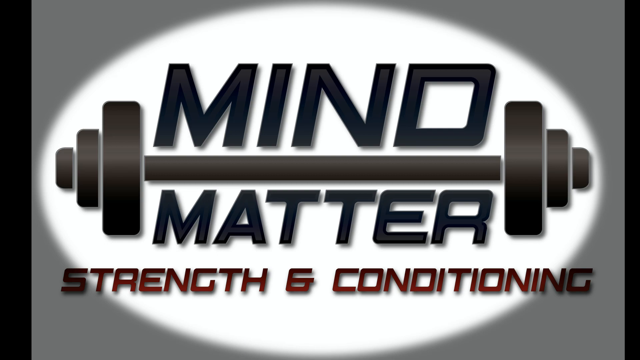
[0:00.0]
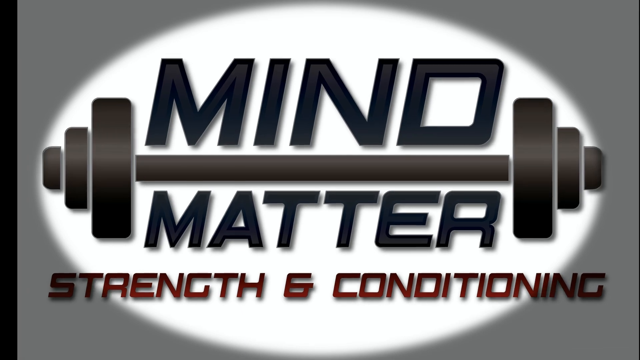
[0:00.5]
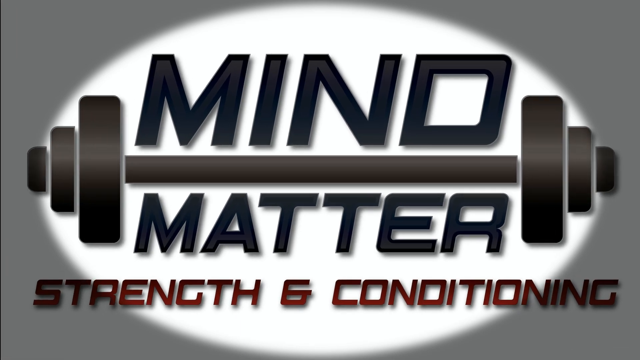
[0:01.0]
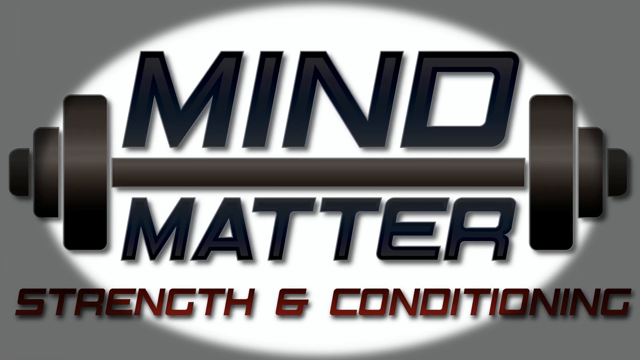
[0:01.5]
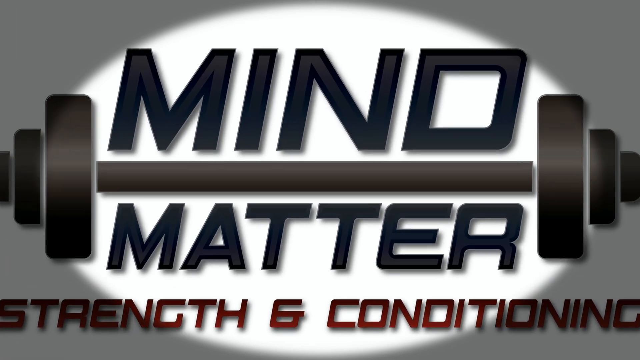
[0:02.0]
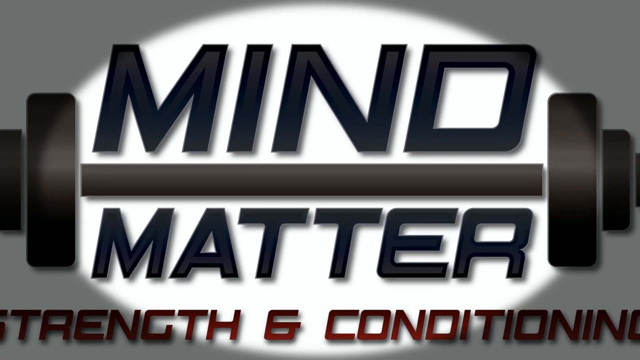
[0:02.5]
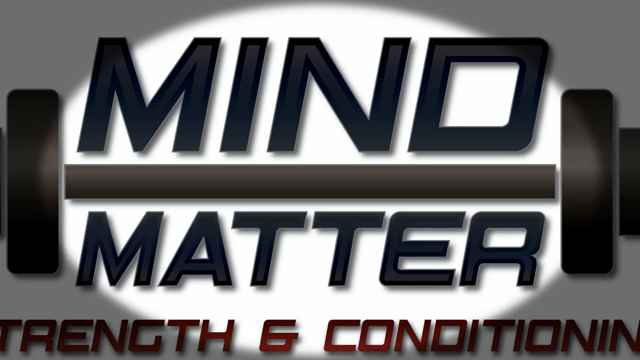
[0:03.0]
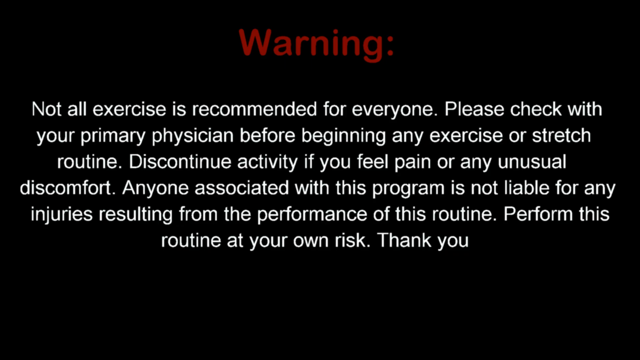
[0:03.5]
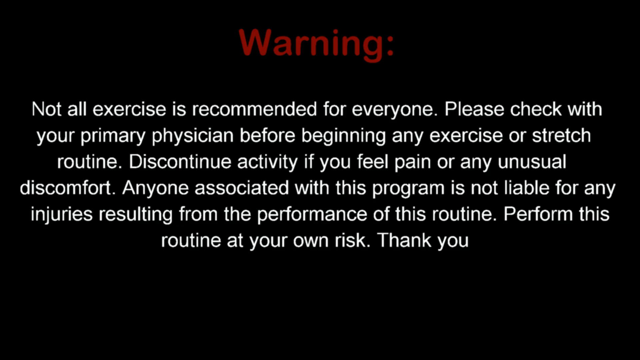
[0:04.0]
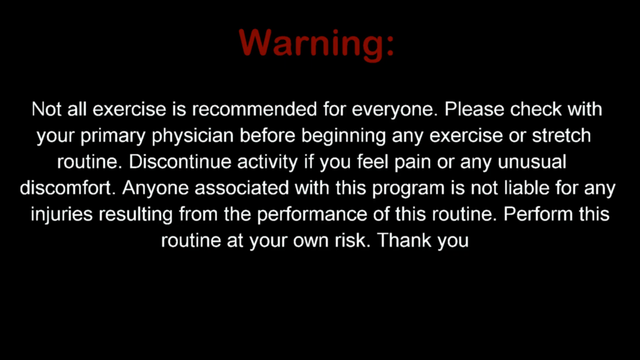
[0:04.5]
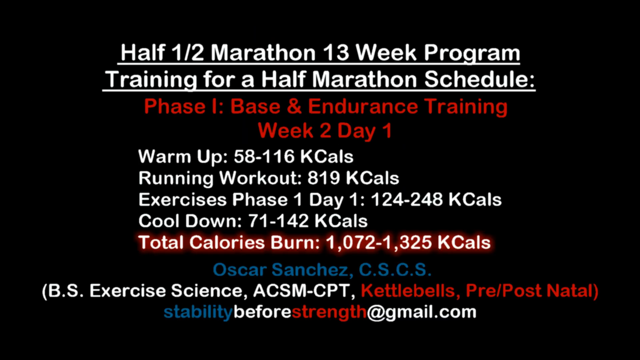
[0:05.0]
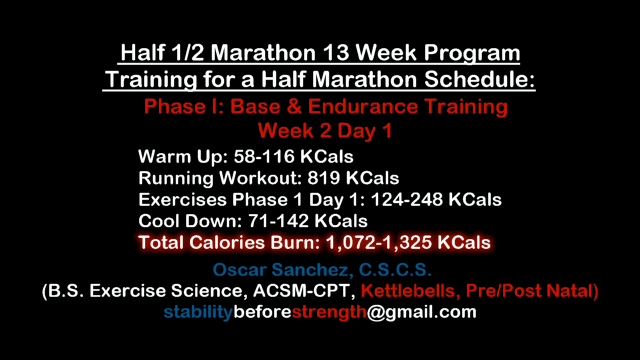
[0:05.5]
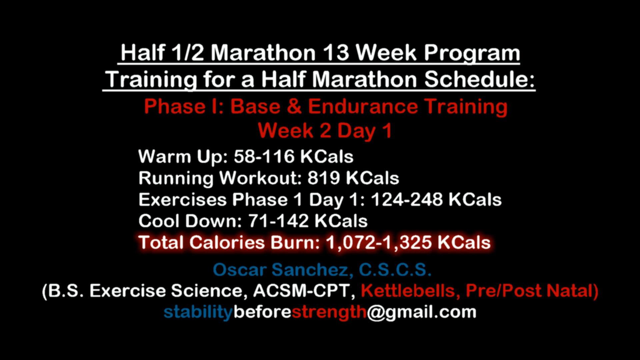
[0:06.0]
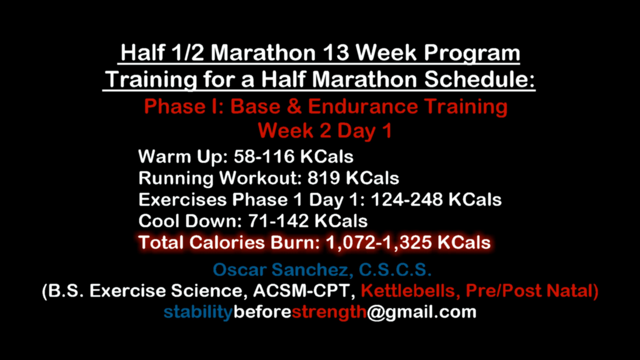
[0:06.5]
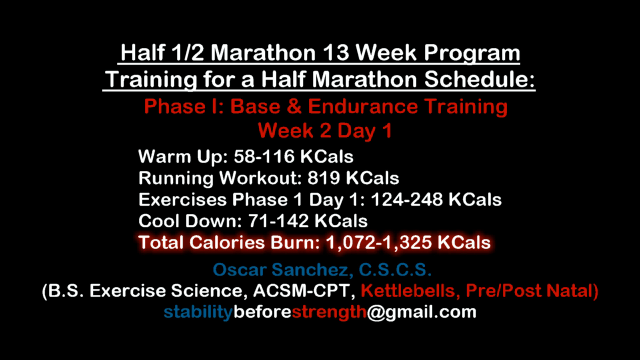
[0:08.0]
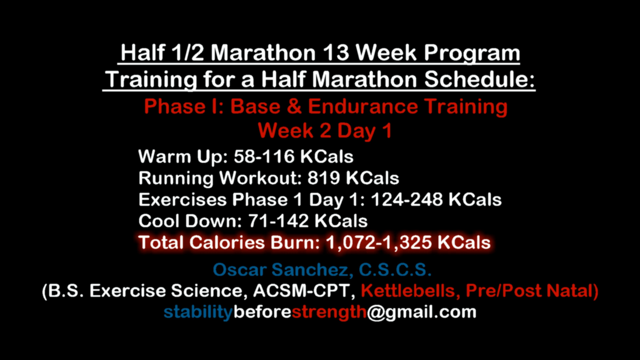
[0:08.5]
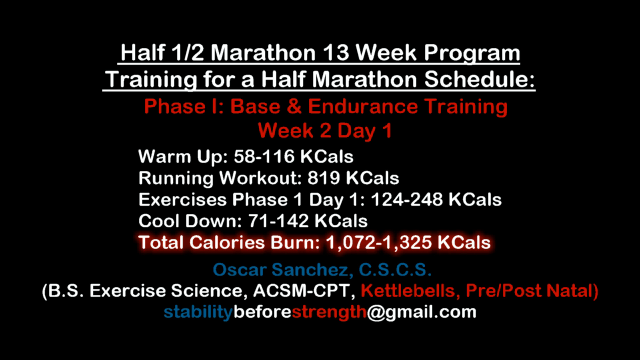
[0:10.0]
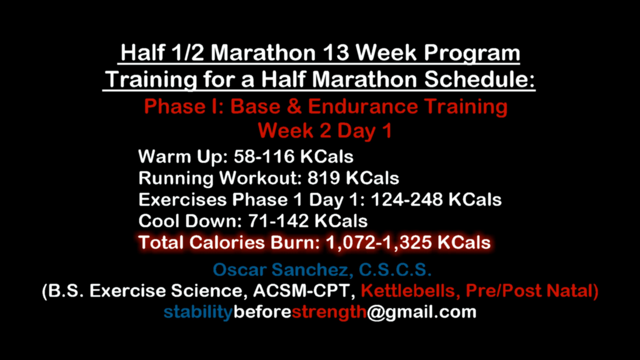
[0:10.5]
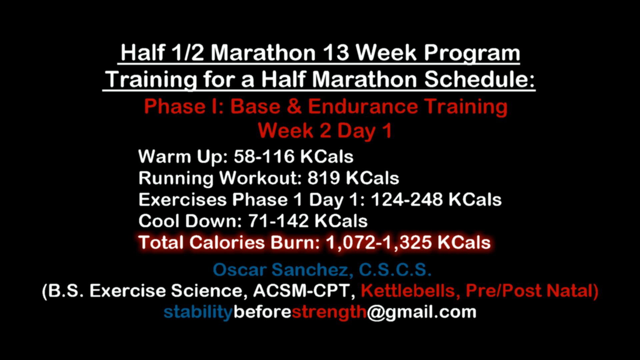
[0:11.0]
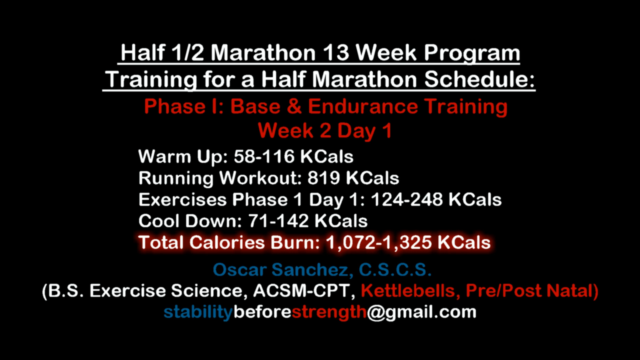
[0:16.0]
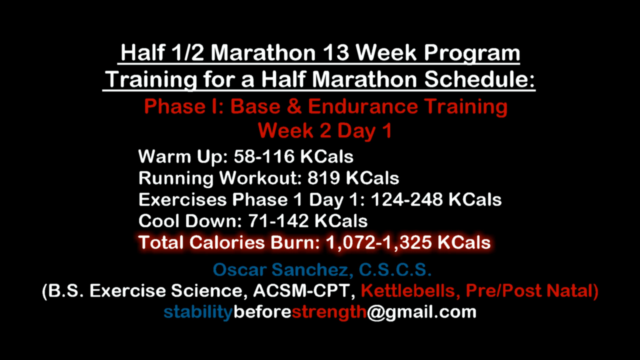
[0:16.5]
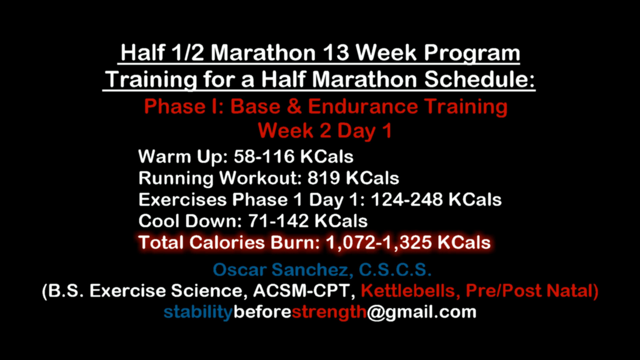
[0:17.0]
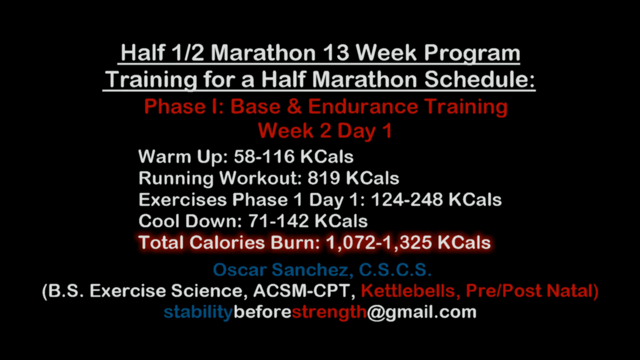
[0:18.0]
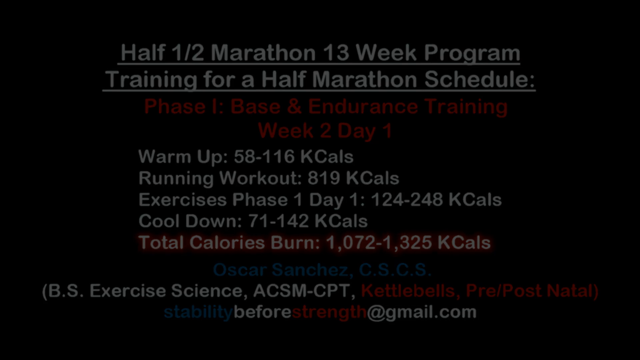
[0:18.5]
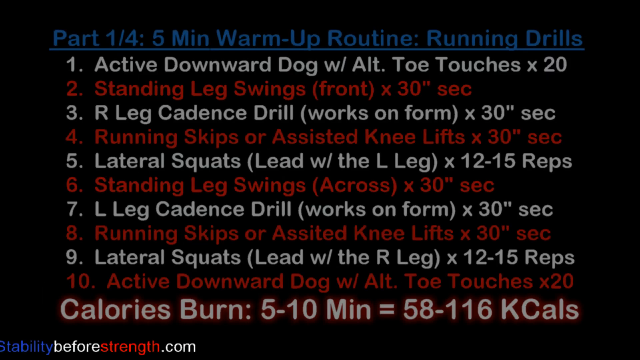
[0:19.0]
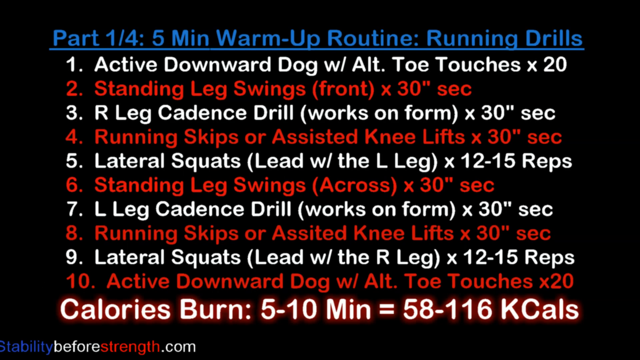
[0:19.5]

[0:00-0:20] A white circle contains blue-black text reading "Mind Matter" along with a drawing of a weight. There is some grey in the background and red text reading "Strength and Conditioning." The text moves closer to the screen while the circle in the background stays exactly where it is. Next, a black background shows bold red text reading "Warning" and white text reading "Not all exercise is recommended for everyone. Please check with your primary physician before beginning any exercise or stretch routine. Discontinue activity if you feel pain or any unusual discomfort. Anyone associated with this program is not liable for any injuries resulting from the performance of this routine. Perform this routine at your own risk. Thank you." Then another black background shows white, red and blue text reading "Half Marathon" and "13-week program training for a half marathon schedule," with the text underlined. It continues: "Phase 1 base and endurance training, week 2 day 1, warm up 58-116 kcal, running workout 819 kcal, exercises phase 1 day 1 124-248 kcal, cool down 71-142 kcal, total calories burn 1072-1325 kcal," along with "Pre-Post Natal" and "stability before strength at gmail.com." The video then moves to another black screen with blue, white and red text reading "Part one out of four, five minute warm-up routine, running drills. 1 active downward dog with alt toe touches x 20. 2 standing leg swings front x 30 sec. 3 R leg cadence drill works on form x 30 sec. 4 running skips or assisted knee lifts x 30 sec. 5 lateral squats lead with the L leg x 12 to 15 reps. 6 standing leg swings across x 30 sec. 7 L leg cadence drill works on form x 30 sec. 8 running skips or assisted knee lifts x 30 sec. 9 lateral squats lead with the R leg x 12 to 15 reps. 10 active downward dog with alt toe touches x 20. Calories burned 5 to 10 minutes = 58 to 116 kcals."